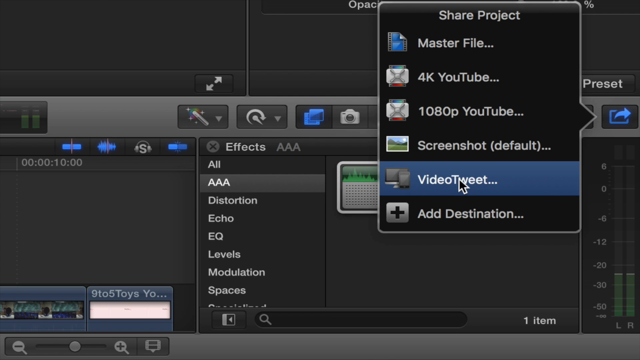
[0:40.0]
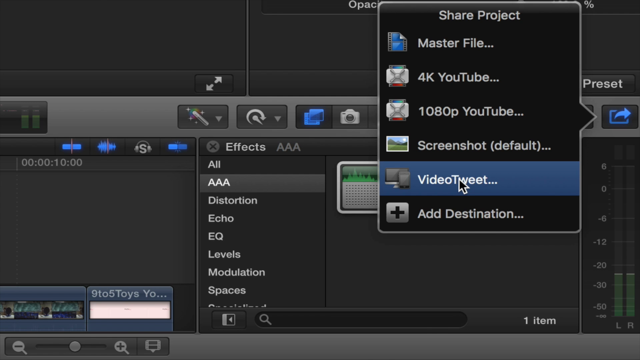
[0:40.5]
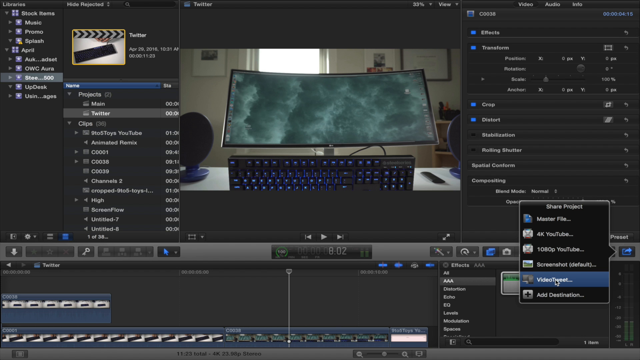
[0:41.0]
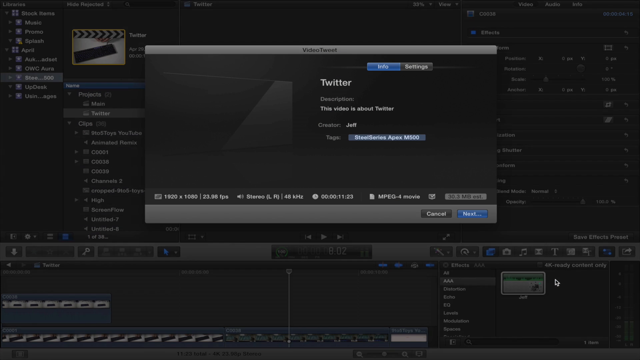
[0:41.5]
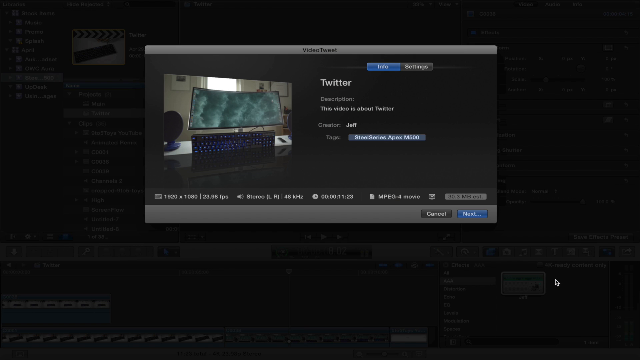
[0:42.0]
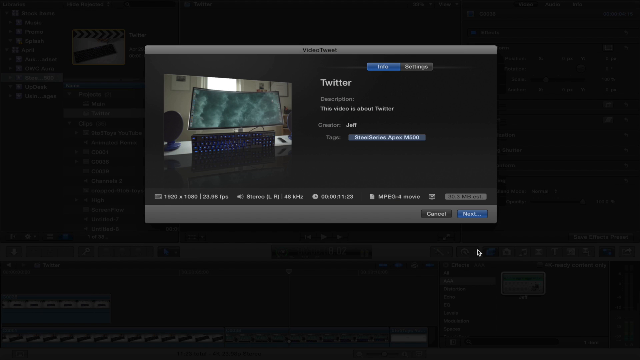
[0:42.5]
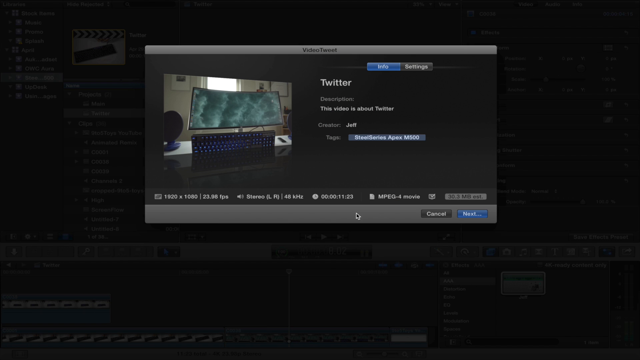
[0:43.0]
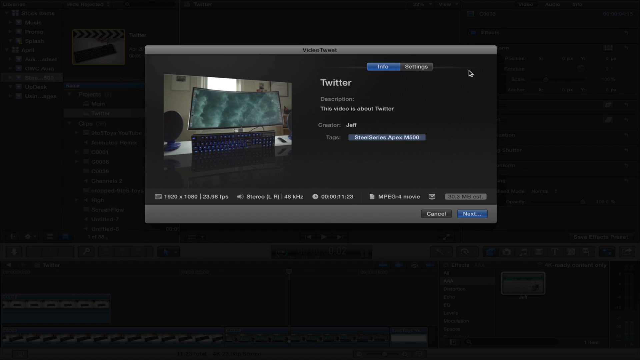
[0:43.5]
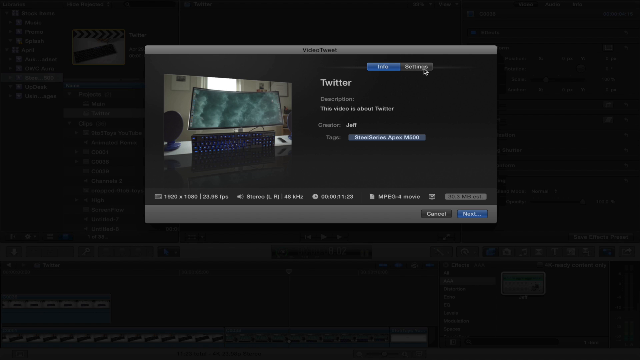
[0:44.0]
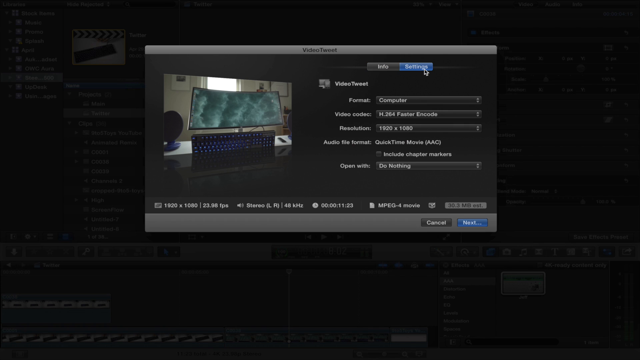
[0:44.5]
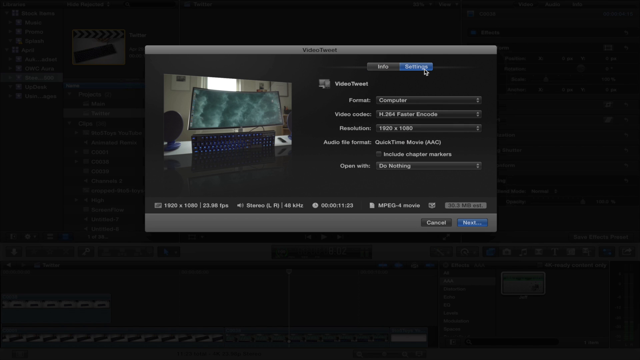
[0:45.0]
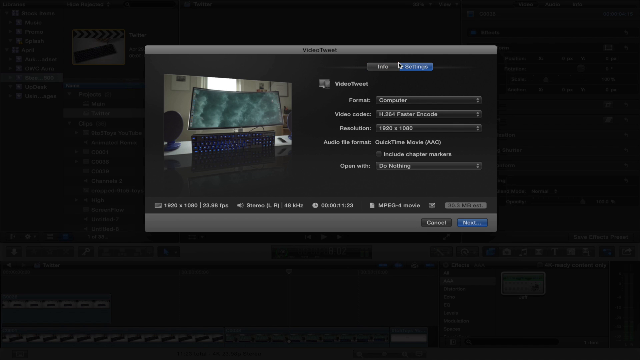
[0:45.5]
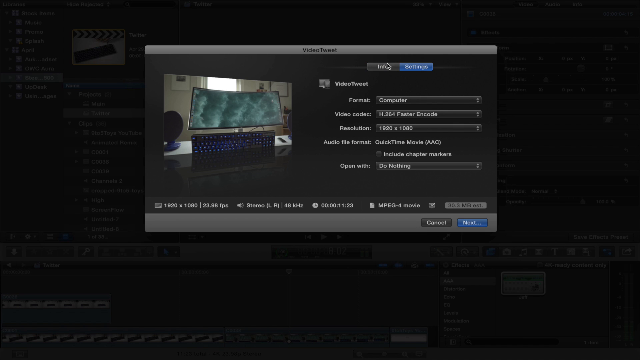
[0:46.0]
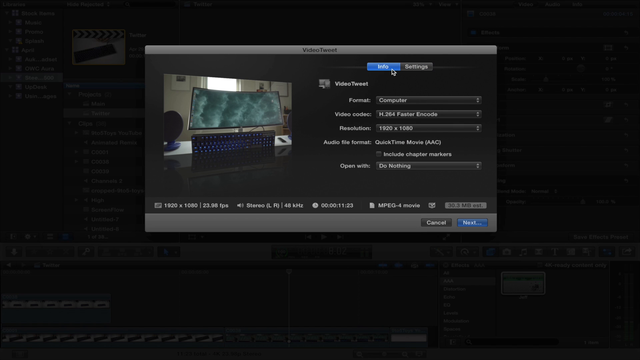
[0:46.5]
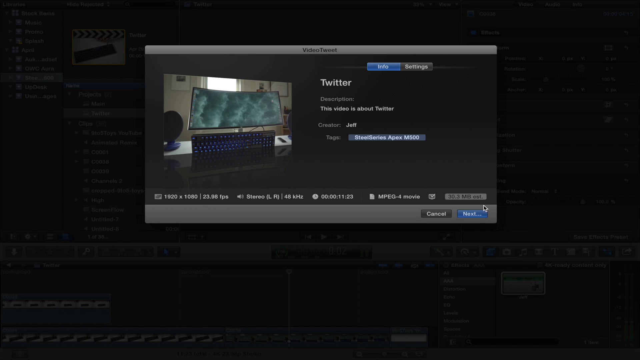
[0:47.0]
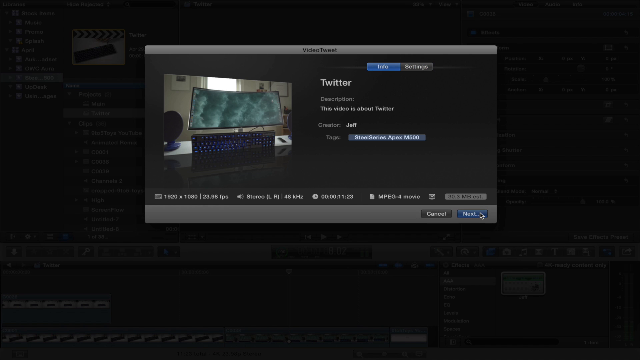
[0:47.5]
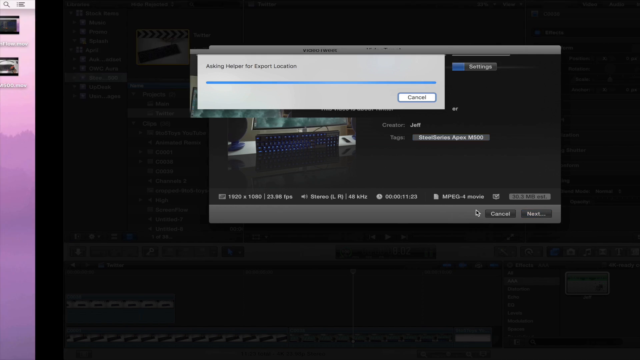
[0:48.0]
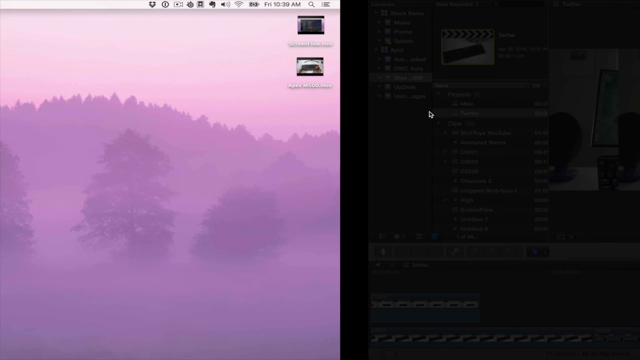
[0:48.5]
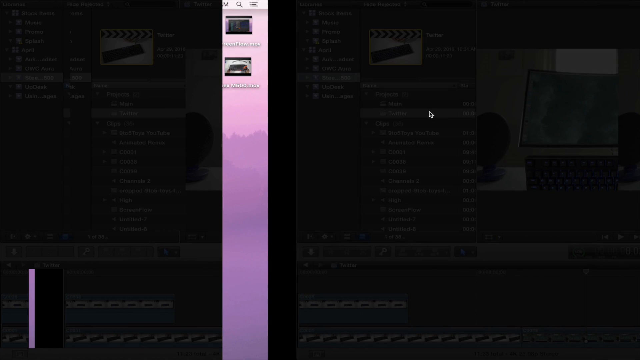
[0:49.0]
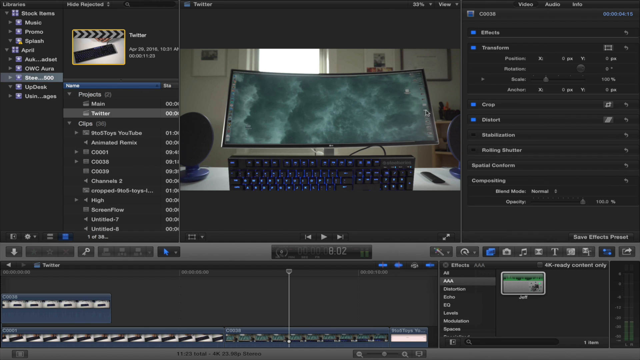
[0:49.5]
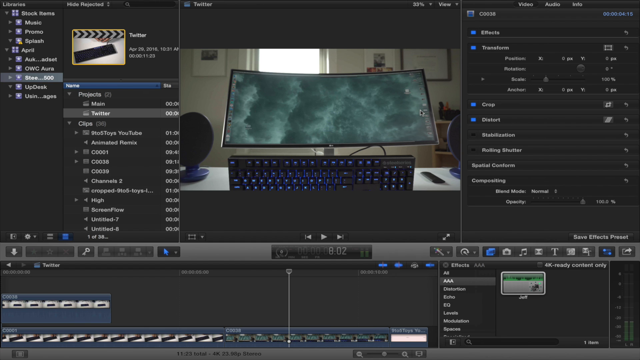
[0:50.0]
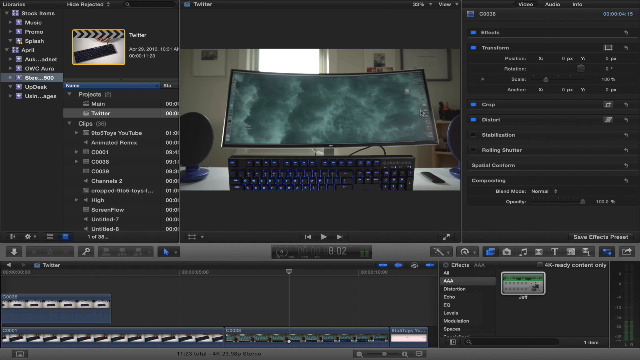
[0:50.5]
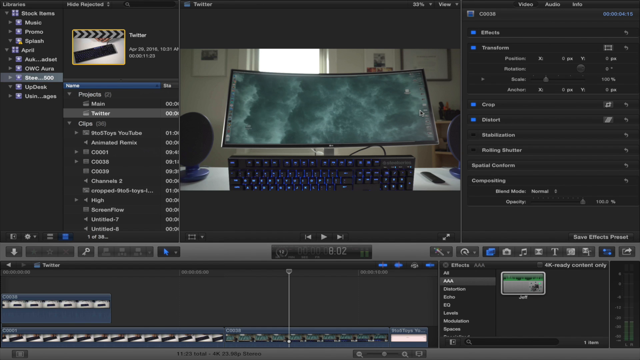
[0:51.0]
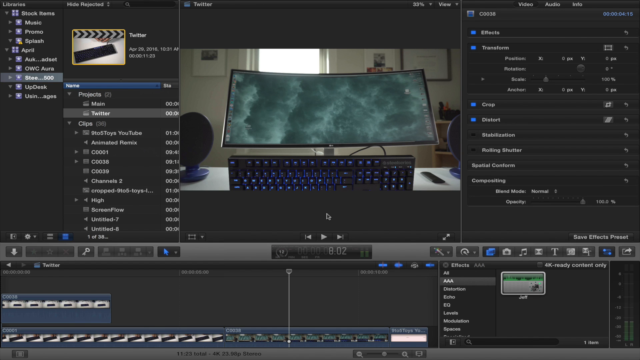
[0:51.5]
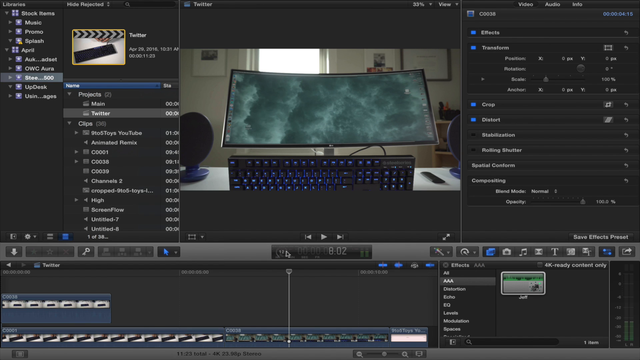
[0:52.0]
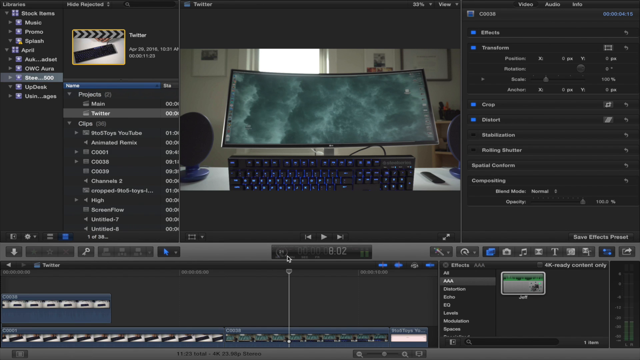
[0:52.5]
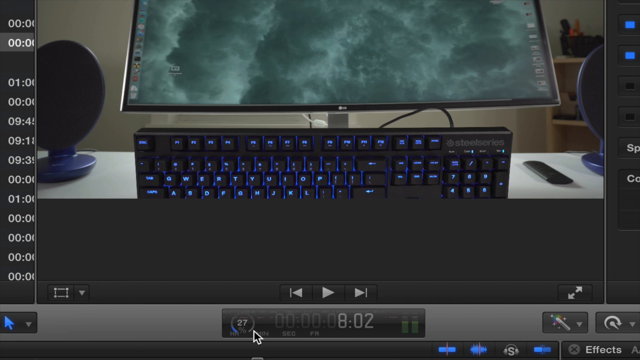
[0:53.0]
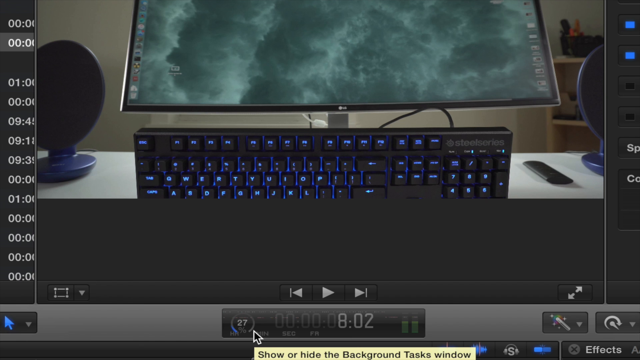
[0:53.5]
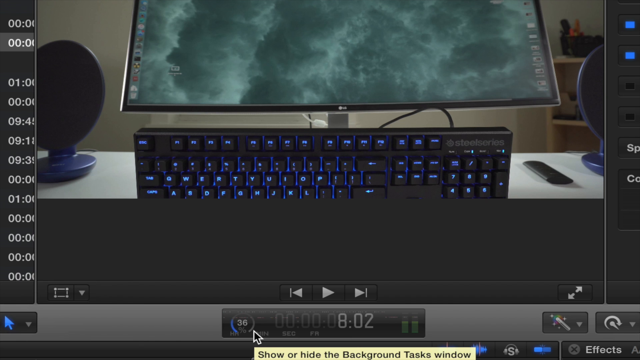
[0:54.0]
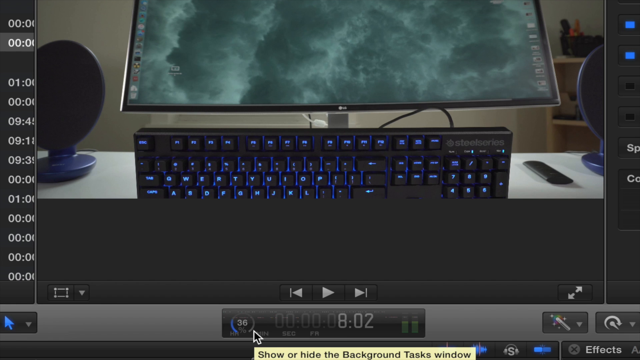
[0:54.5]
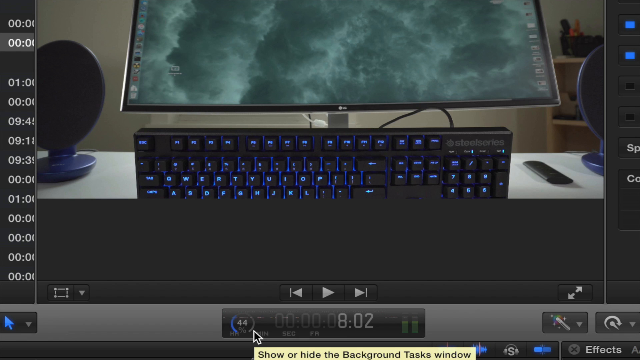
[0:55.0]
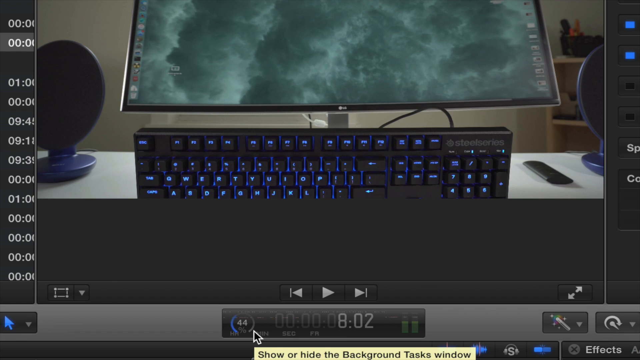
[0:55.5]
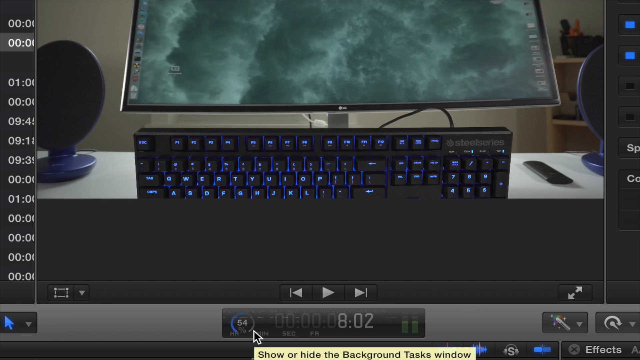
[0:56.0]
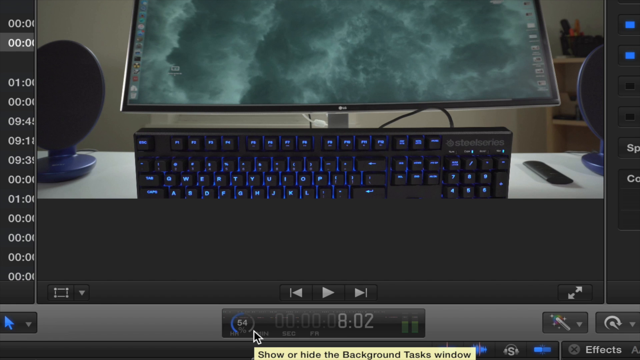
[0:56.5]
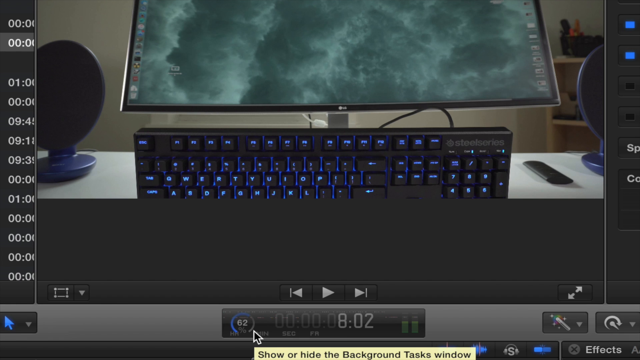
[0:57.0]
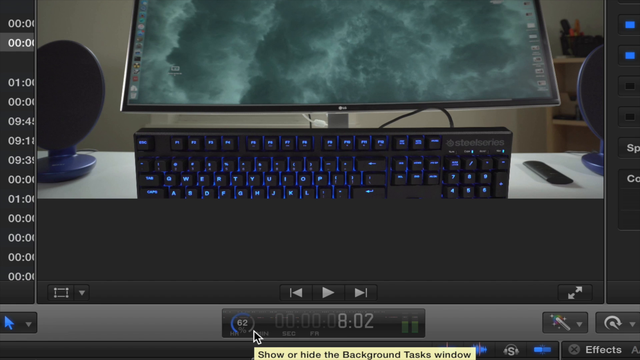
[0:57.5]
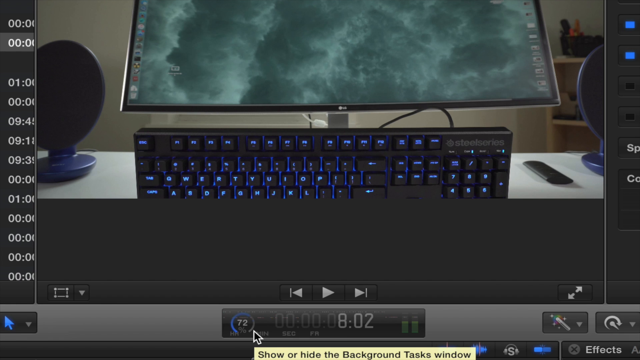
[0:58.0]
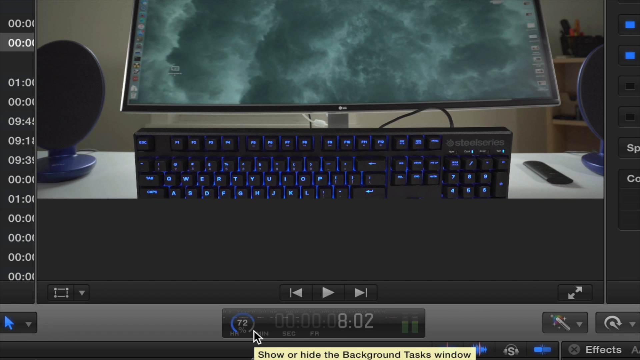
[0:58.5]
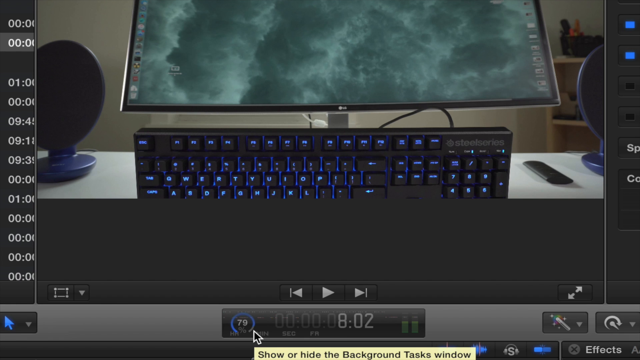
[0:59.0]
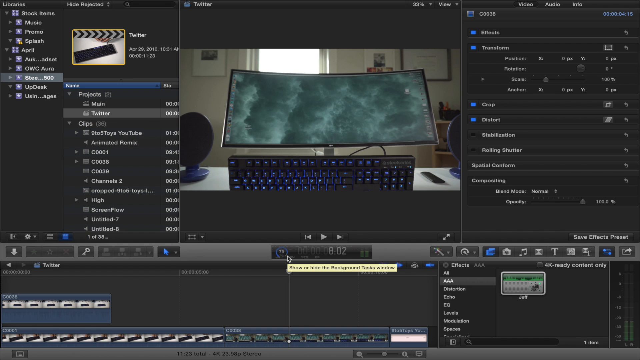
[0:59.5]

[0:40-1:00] With the Video Tweet option highlighted, the view zooms back out to the full editing software display. When it is clicked, the display fades into shadow and a horizontal display box quickly appears in the middle of the frame, with light grey horizontal bars at the top and bottom. The top bar reads "VideoTweet". On the left of the box is a picture, slightly angled, taller at the left and narrowing toward the right, showing a still image of the computer monitor with the keyboard in front of a window in a home office space. To the right, under "Info", is "Twitter"; the "description" field reads "This video is about Twitter" and under "creator" is "Jeff". Underneath, in a horizontal row, are details on the video footage: its resolution, that it is in stereo, a length of 11.23, and that it is an MPEG-4 movie. Options for "Cancel" or "Next" are in the bottom right corner. The mouse goes up to the "Settings" option and clicks it, and the content changes to show "Format" as "Computer", "Video Codec" as "H.264" and "Resolution" as "1920x1080". The cursor moves back to highlight the "Info" option before clicking "Next" in the bottom right corner. Another grey horizontal pop-up window appears reading "Asking helper for export location", with a progress bar that almost immediately fills in blue and a white "Cancel" icon in the bottom right of the box. The greyed-out software in the background and the Video Tweet pop-up quickly move across to the right, pulling in from the left a new pink computer desktop with trees and a forest further in the background, all lit in a hazy light purple. There are two icons in the top right of the screen, and in the top left is the Apple Mac symbol with "Video Tweet" next to it, showing what software is open. Two black areas appear on either side of a thin vertical pink strip before the video cuts back to the video editing software filling the entire screen. The preview section in the top centre shows the computer monitor with the keyboard in front of it, in front of a window in an office environment. The cursor moves down to the time box, which expands to fill most of the screen with the video preview above it. The cursor is next to a dial that increases in numbers, with a blue circle running around it.